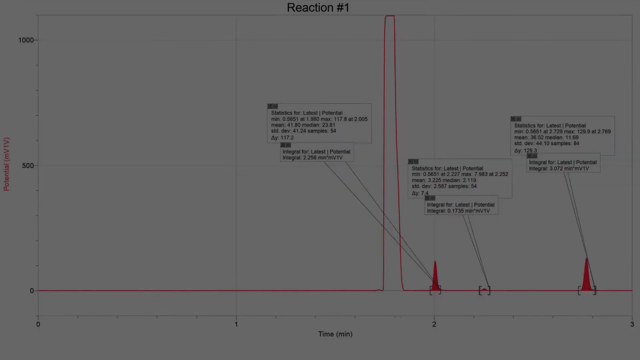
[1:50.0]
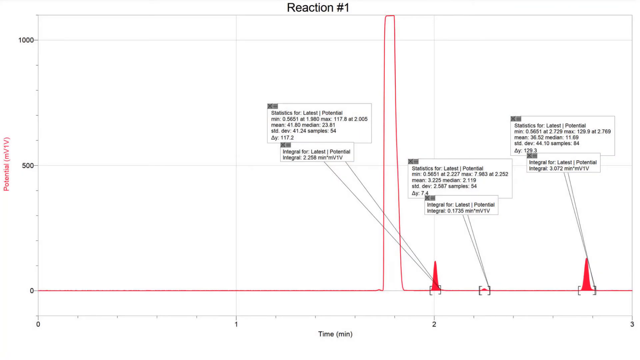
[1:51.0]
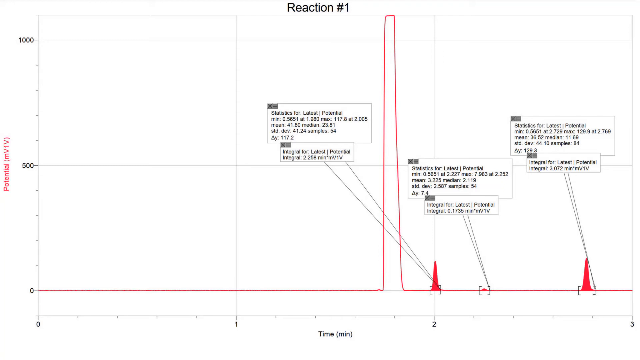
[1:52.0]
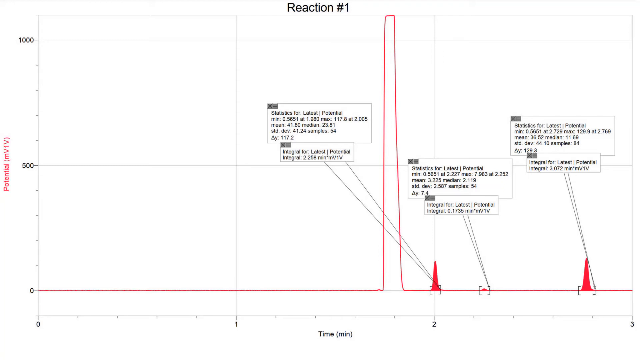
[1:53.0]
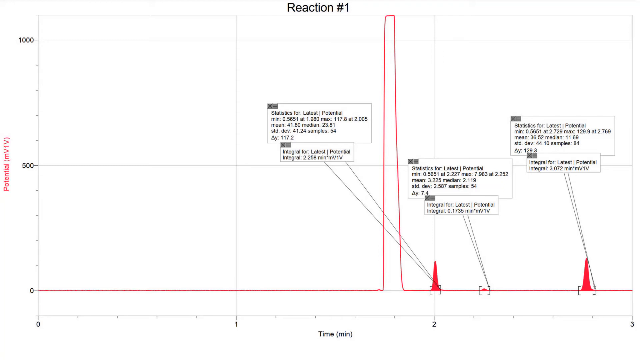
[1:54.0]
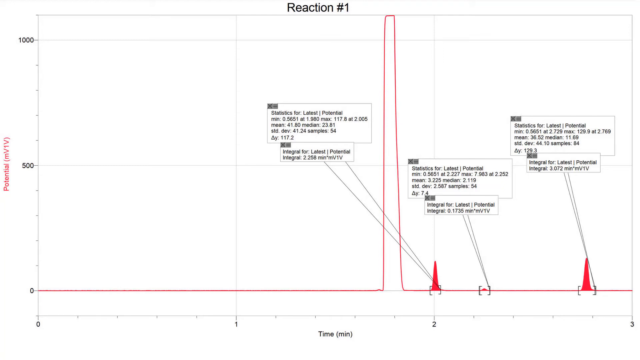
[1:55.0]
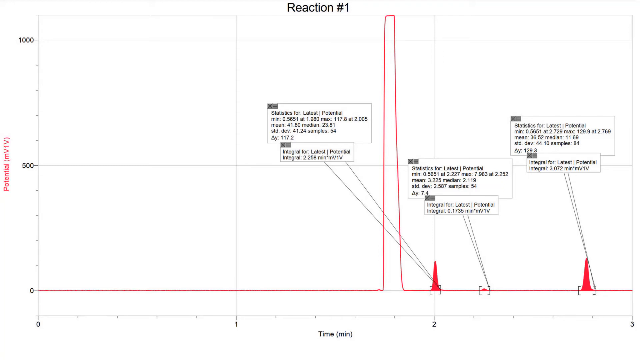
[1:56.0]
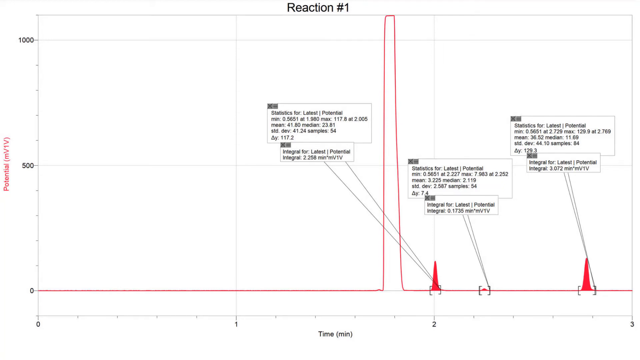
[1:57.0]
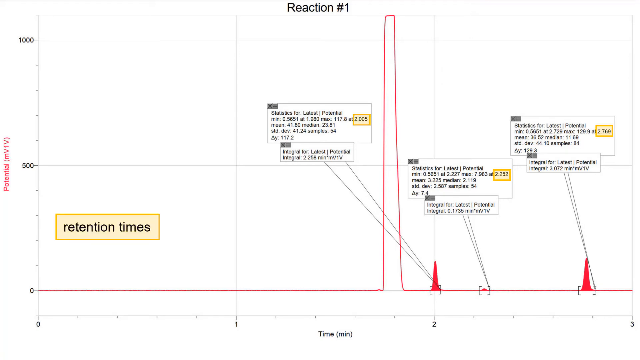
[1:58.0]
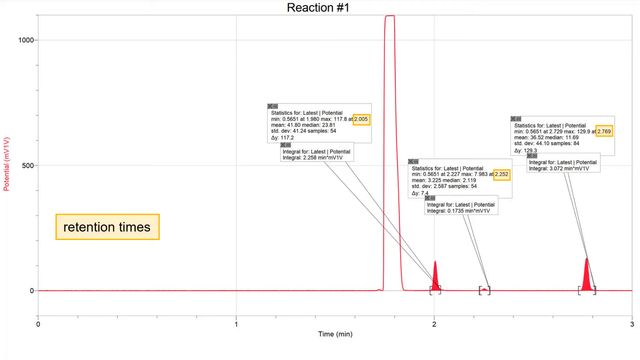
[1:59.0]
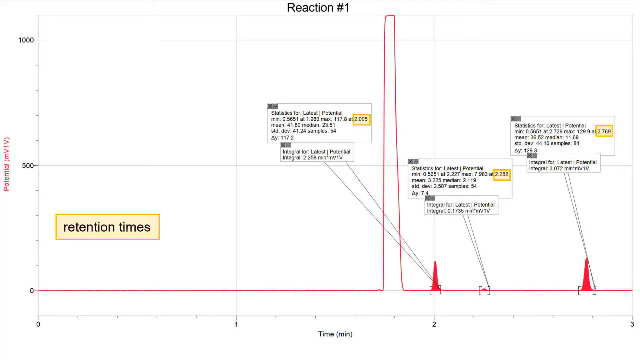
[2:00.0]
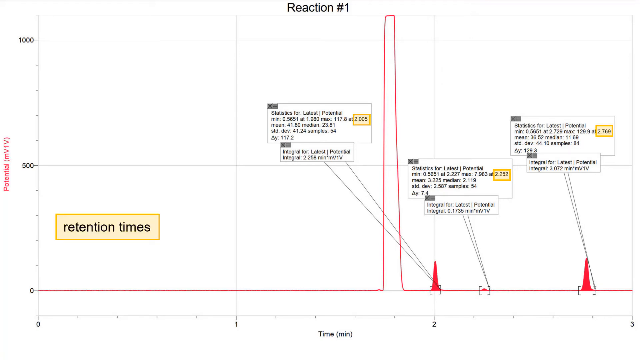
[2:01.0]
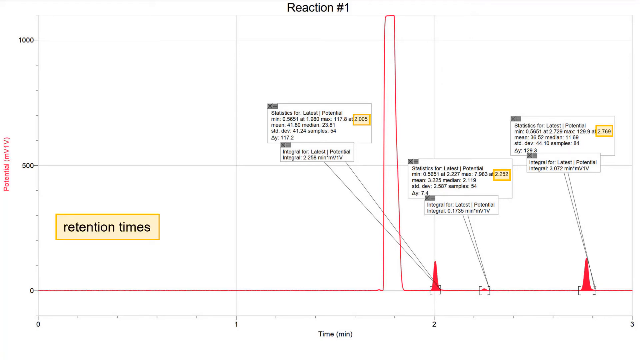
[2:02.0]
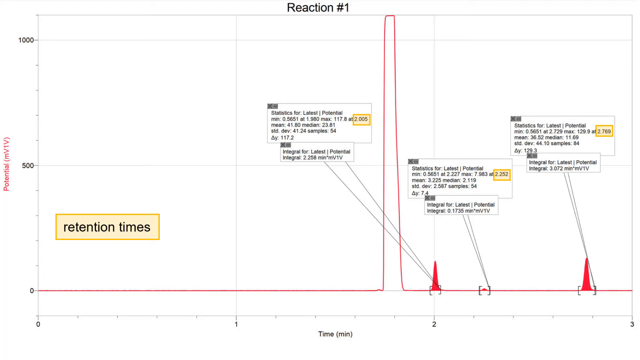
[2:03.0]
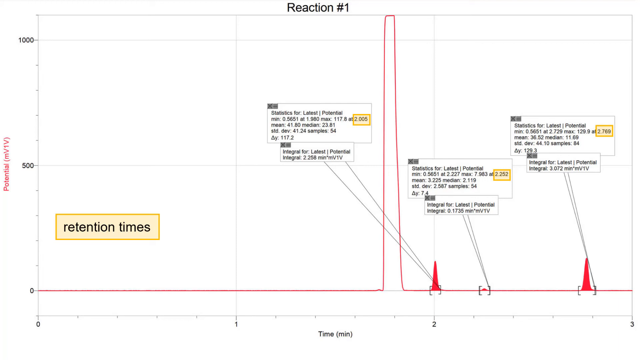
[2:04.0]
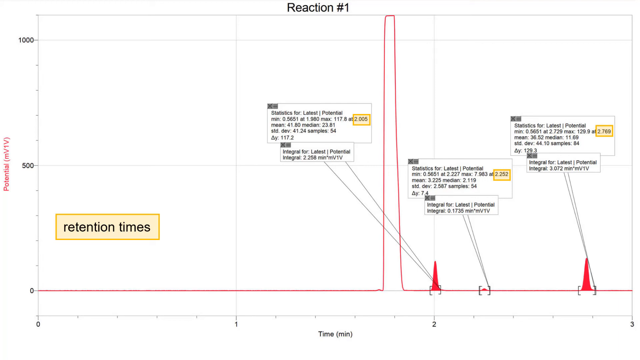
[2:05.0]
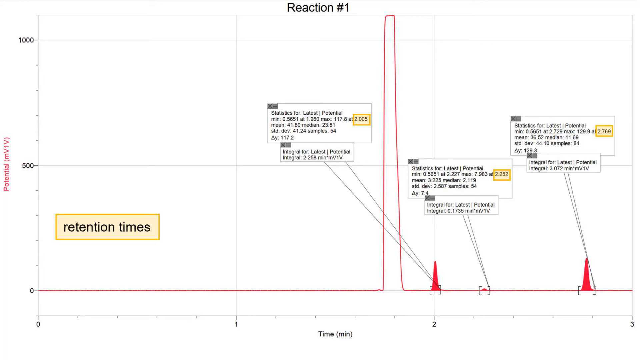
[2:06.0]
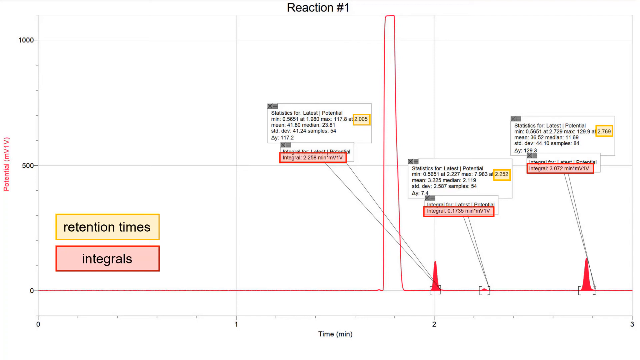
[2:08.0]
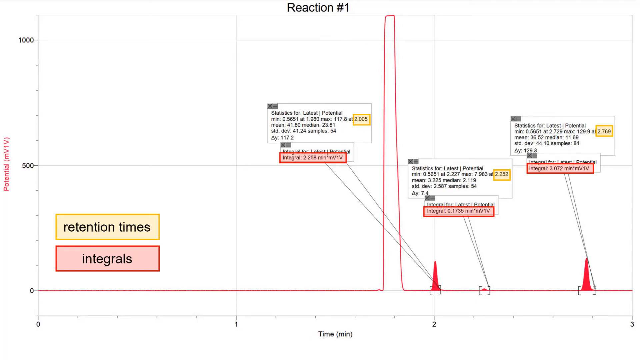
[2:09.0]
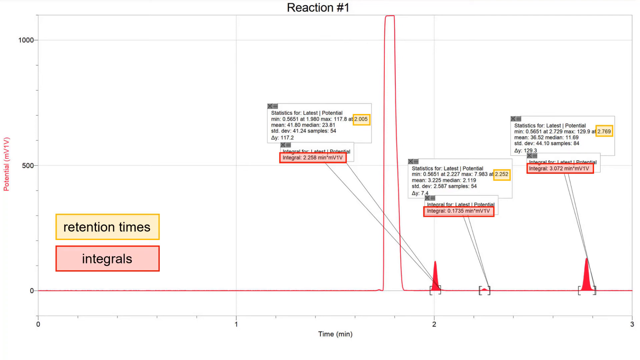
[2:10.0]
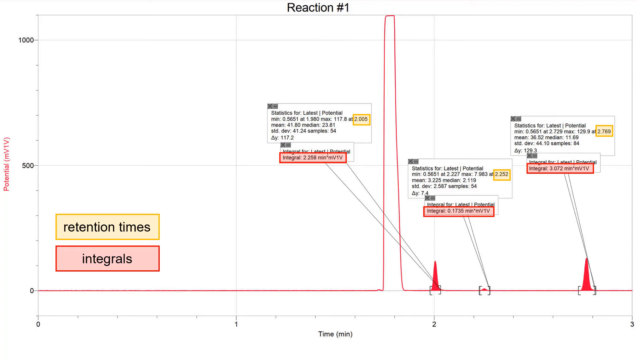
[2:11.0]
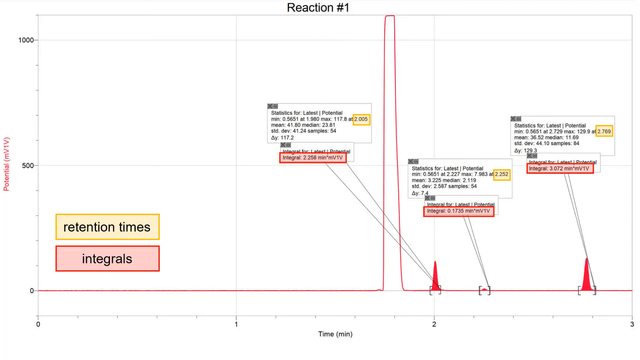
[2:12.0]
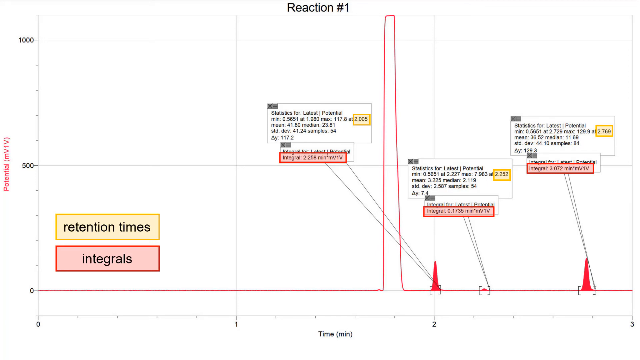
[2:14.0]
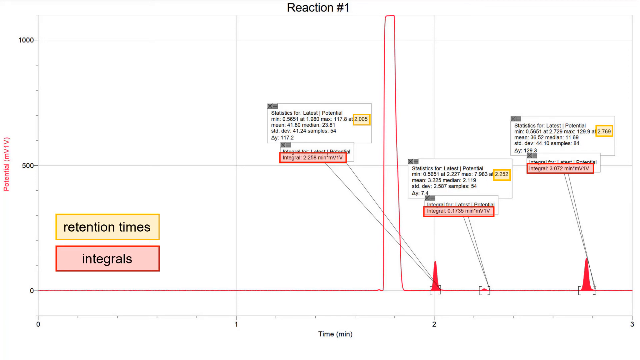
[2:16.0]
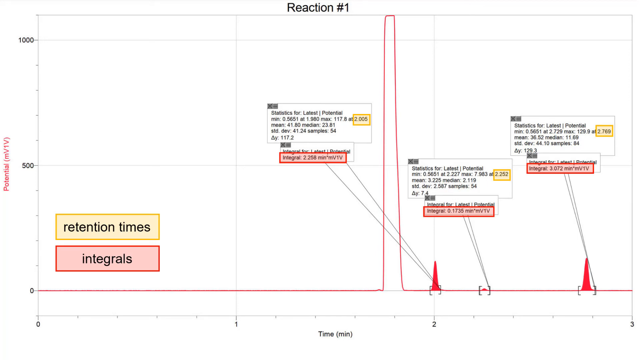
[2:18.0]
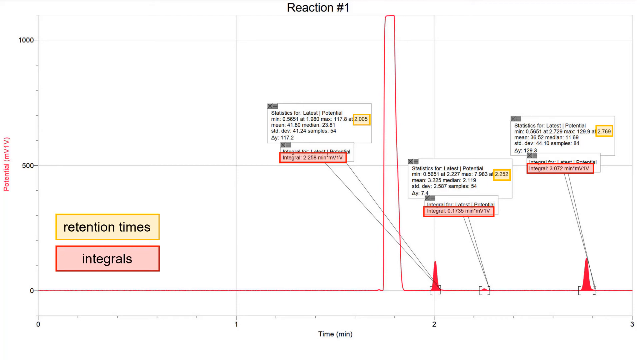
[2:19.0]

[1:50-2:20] The screen shows chemical results with "retention times" text. It is not clear what chemical was tested; only the results are visible, with arrows indicating how the results are displayed.